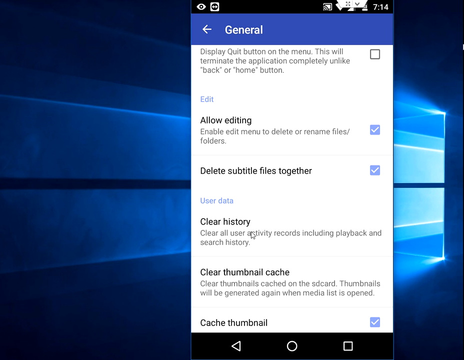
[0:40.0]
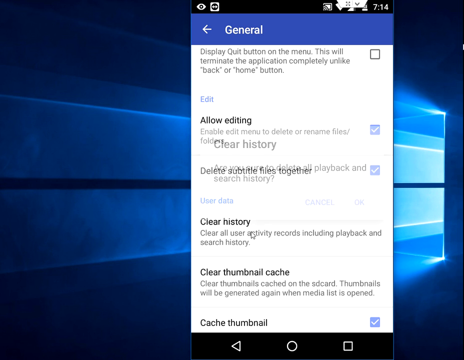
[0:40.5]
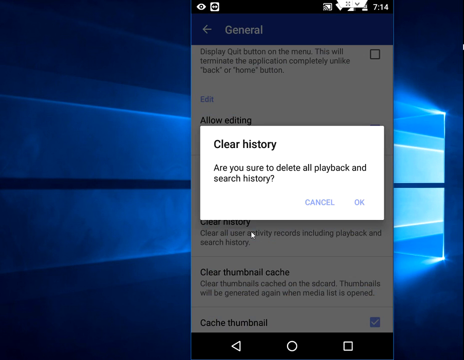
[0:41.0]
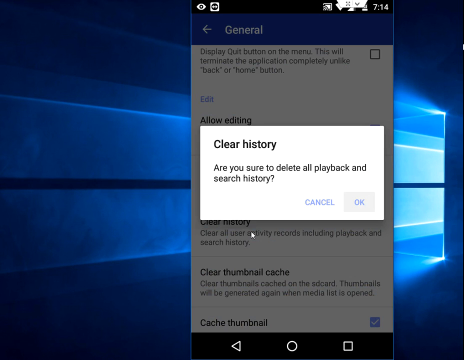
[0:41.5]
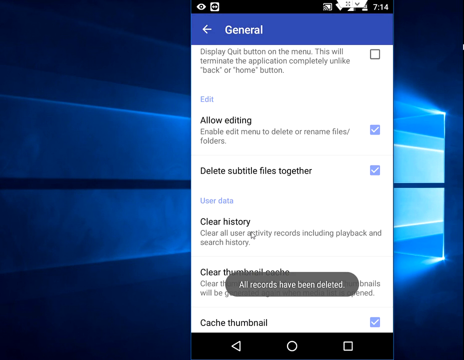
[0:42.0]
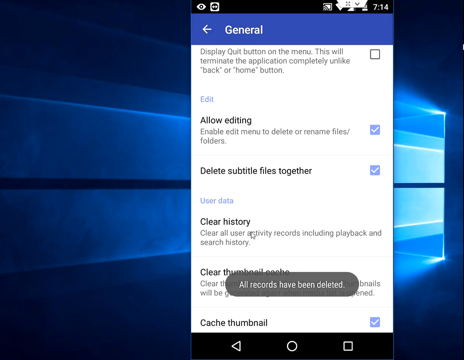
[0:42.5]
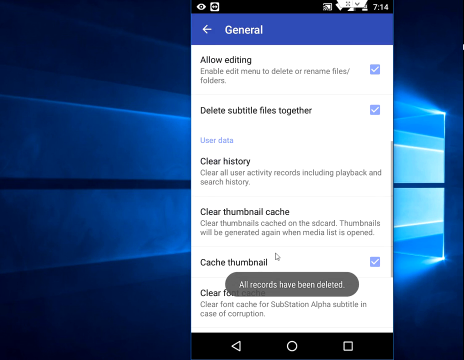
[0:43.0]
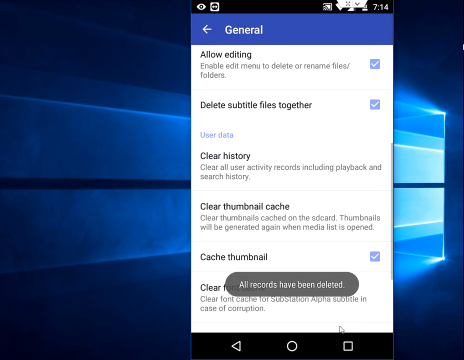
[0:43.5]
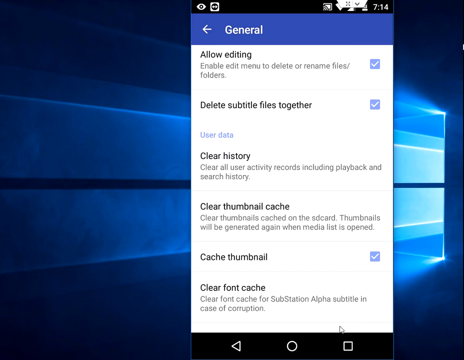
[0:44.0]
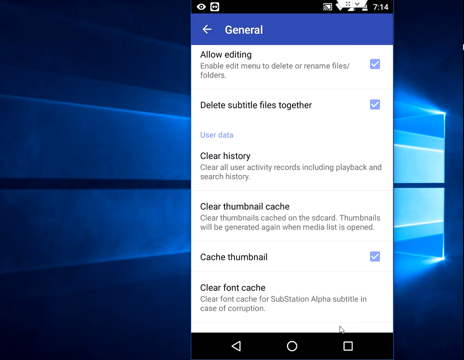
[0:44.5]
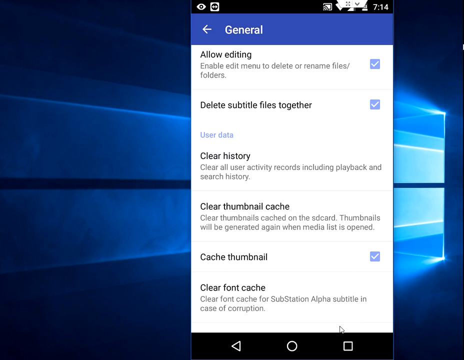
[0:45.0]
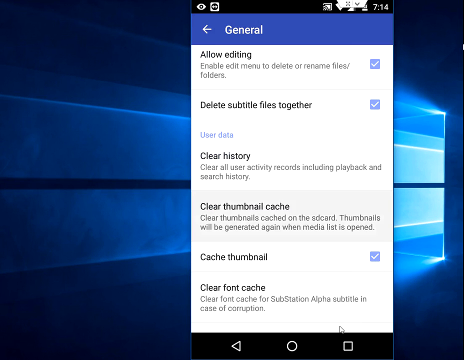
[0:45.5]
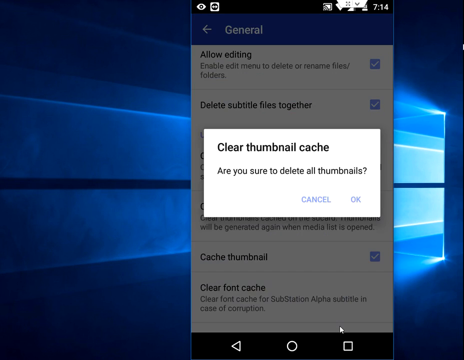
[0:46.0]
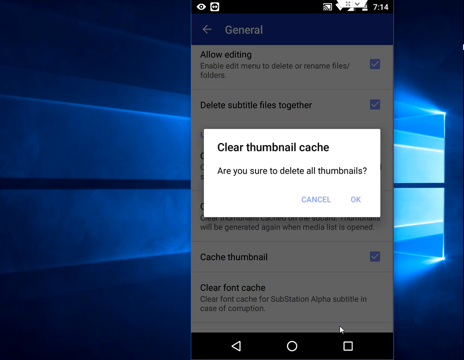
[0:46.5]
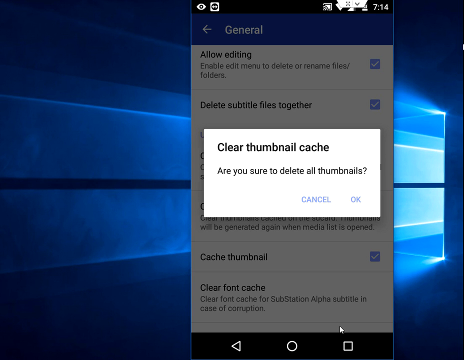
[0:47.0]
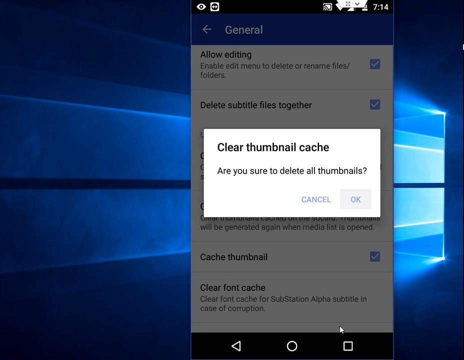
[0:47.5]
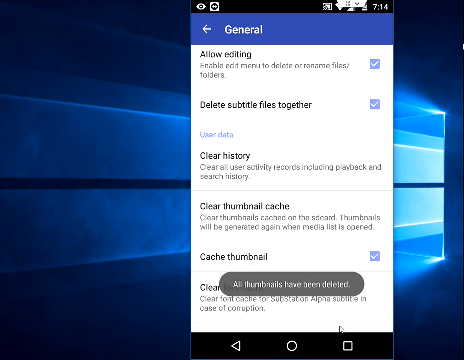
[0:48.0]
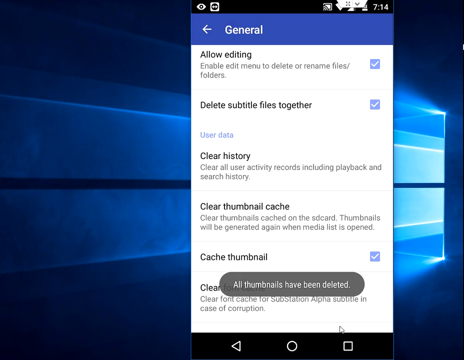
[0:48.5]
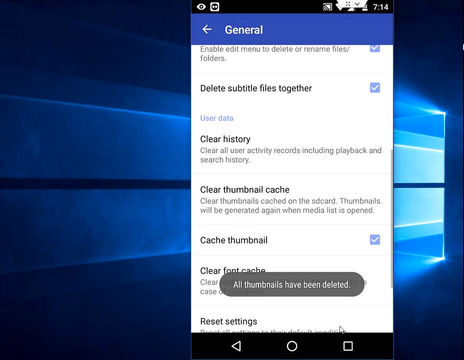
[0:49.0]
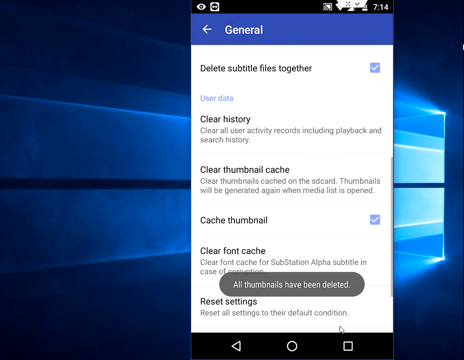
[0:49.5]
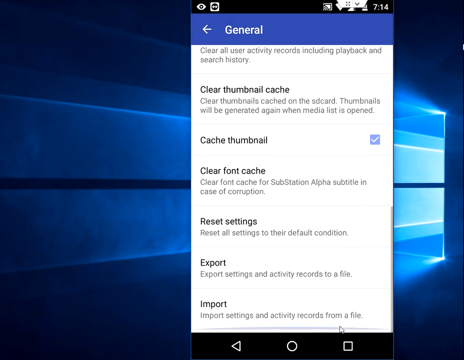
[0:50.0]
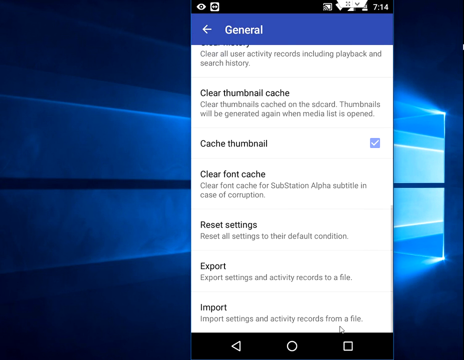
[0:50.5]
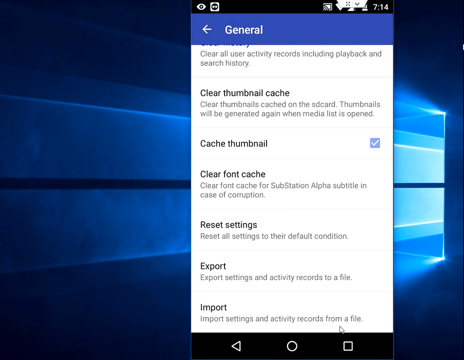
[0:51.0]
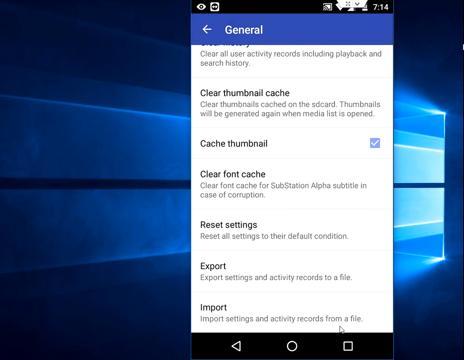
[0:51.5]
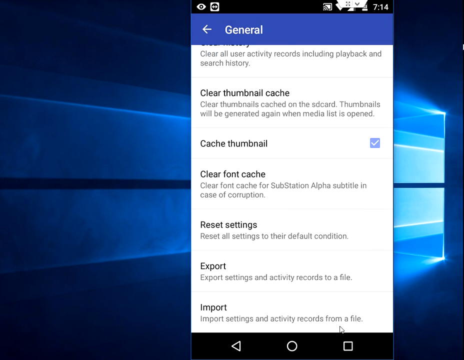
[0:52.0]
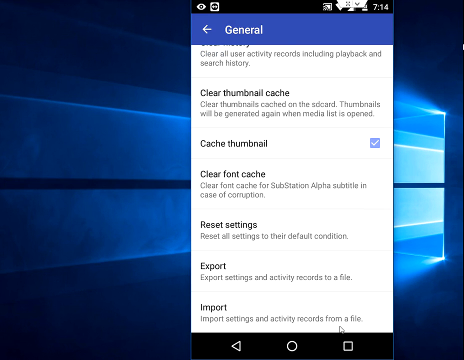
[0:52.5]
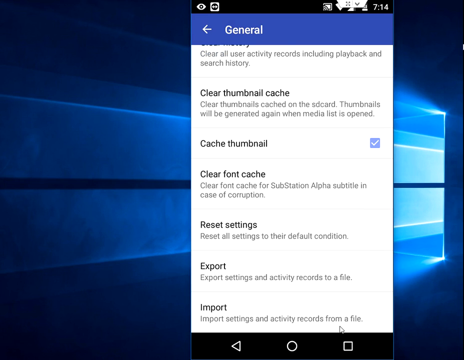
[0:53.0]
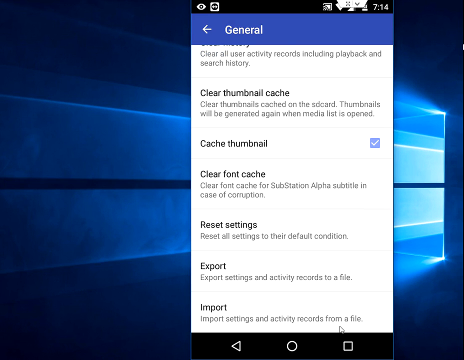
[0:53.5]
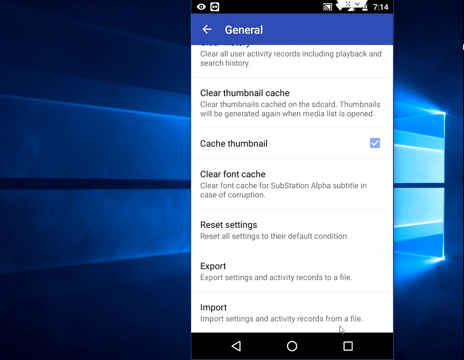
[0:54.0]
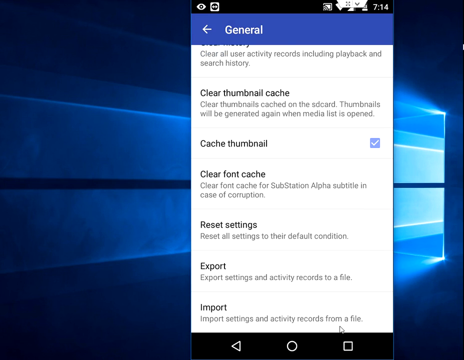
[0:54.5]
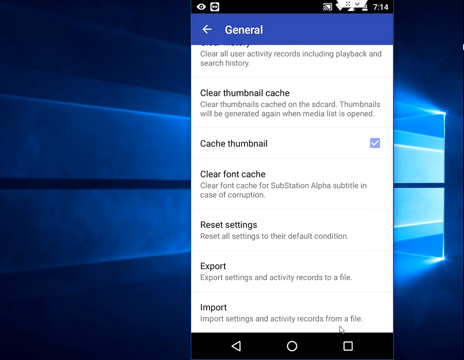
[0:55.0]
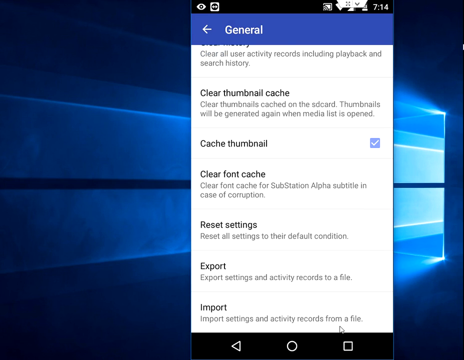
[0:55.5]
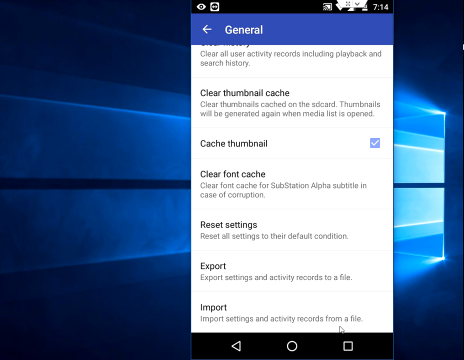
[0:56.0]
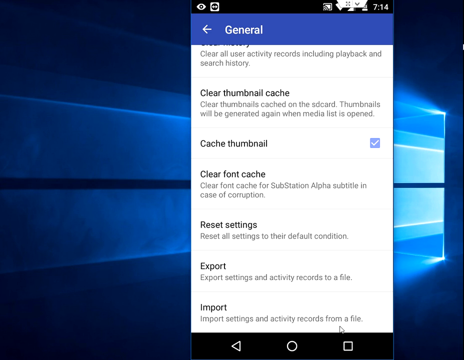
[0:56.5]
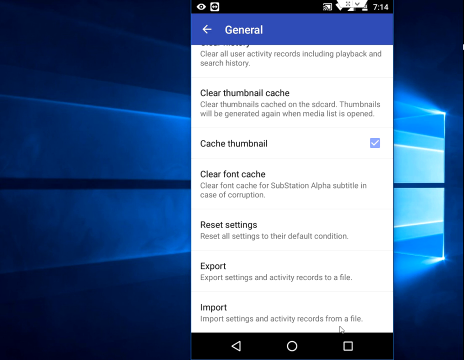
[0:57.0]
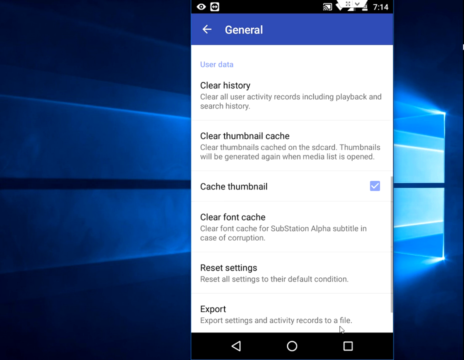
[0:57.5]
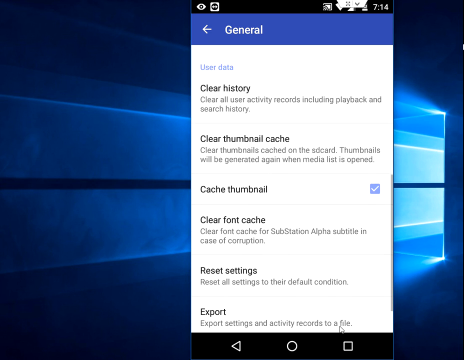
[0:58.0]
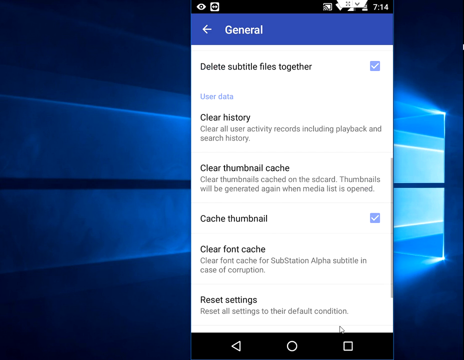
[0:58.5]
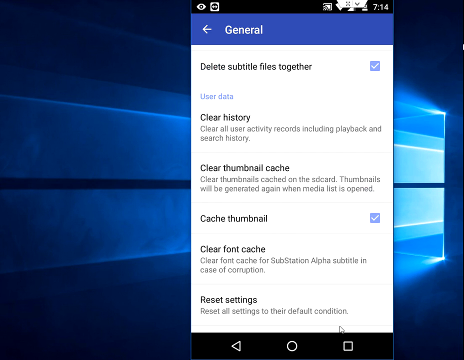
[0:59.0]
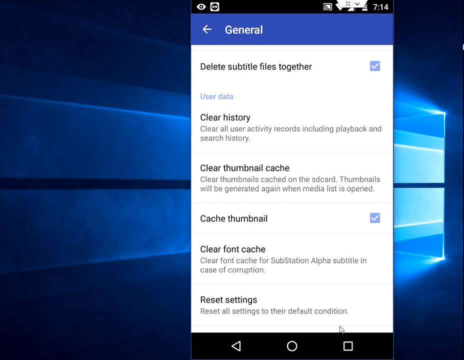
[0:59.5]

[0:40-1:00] The General option of the settings menu is open. At the top of the screen, "General" appears in white text on a blue background, with a back button next to it. Below that it reads "Display quit button on the menu. This will terminate the application completely, unlike back or home button." Next is "Edit," with "Allow editing" and "Enable edit menu to delete or rename files / folders," which is checked. An option for "Delete subtitle folders together" is also checked. Below that is "User data," followed by "Clear history" with "Clear all user activity records, including playback and search history." Below that is "Clear thumbnail cache," whose description is partly not legible but says "Clear thumbnails" and "Thumbnails will be generated again when media list is opened." An option for "Cache thumbnail" is at the bottom. A message then appears that looks like it says "all records have been deleted." The screen scrolls, showing the final option on the menu, "Clear font cache." A pop-up appears reading "Clear thumbnail cache" and "Are you sure to delete all thumbnails?" with options for "Cancel" or "OK."